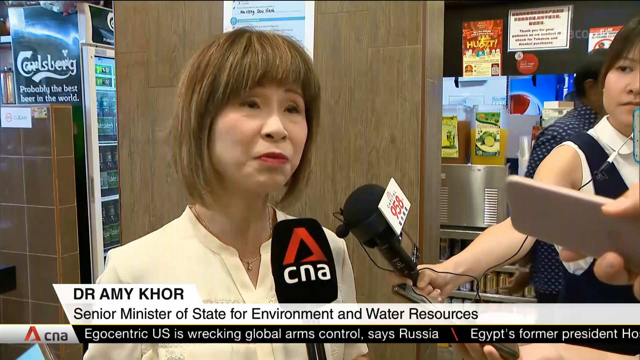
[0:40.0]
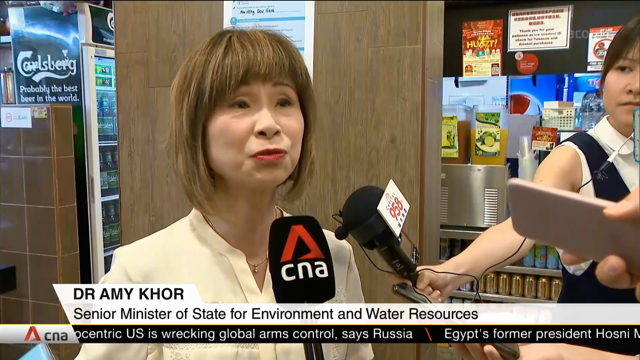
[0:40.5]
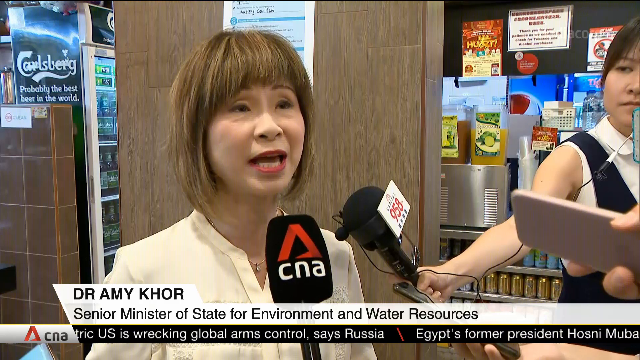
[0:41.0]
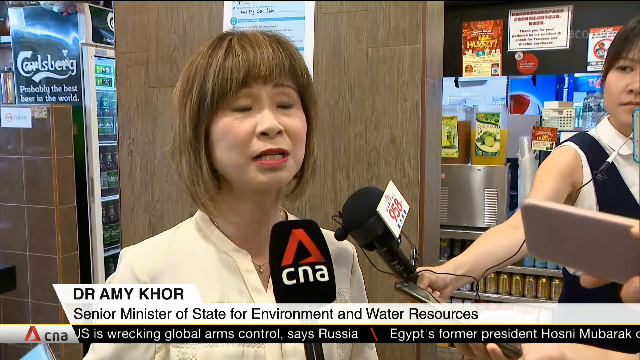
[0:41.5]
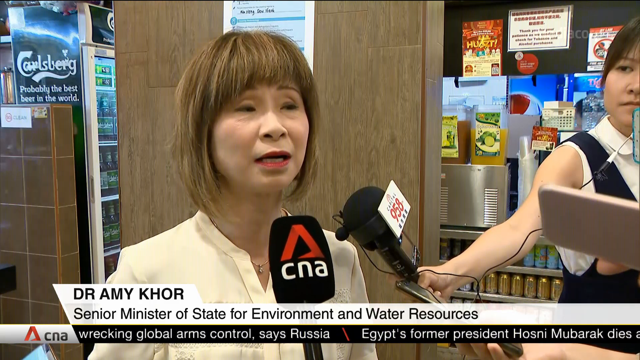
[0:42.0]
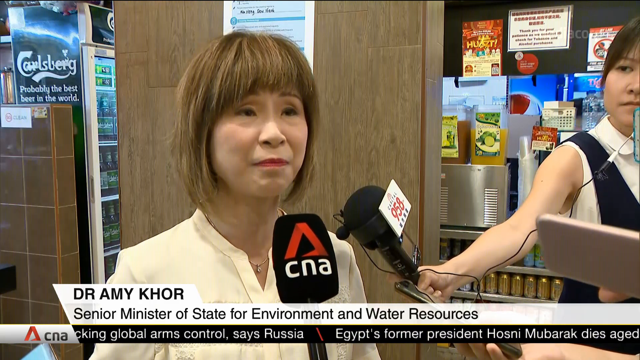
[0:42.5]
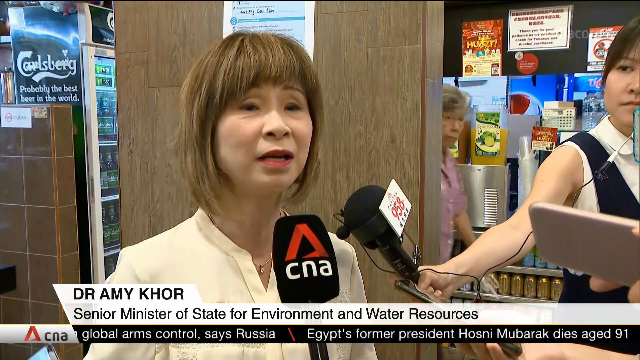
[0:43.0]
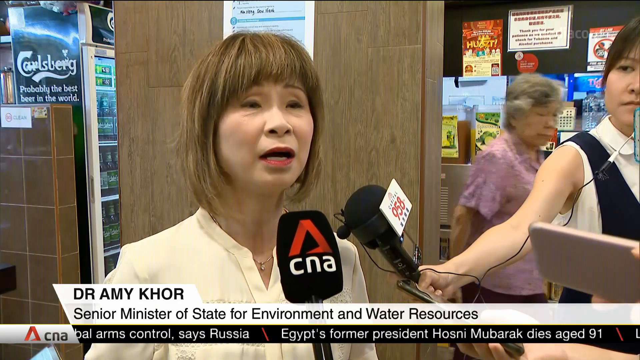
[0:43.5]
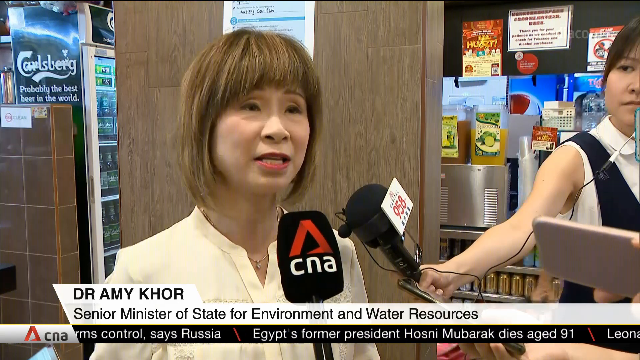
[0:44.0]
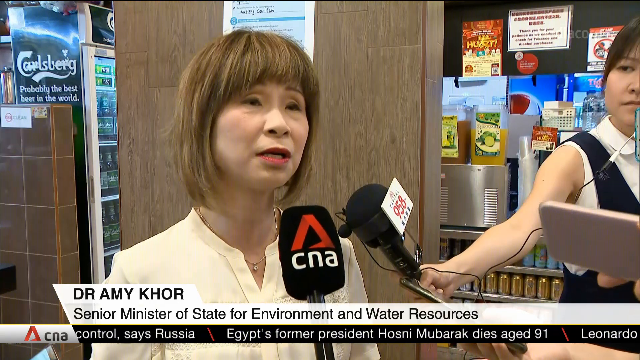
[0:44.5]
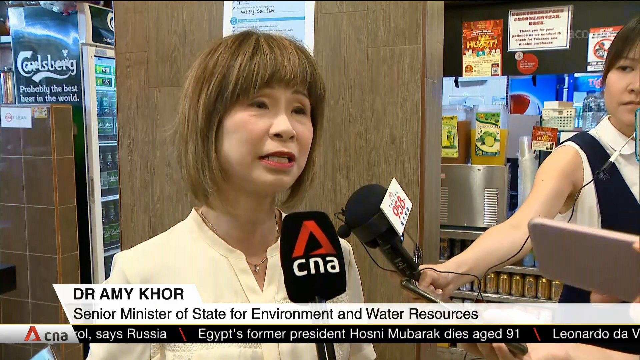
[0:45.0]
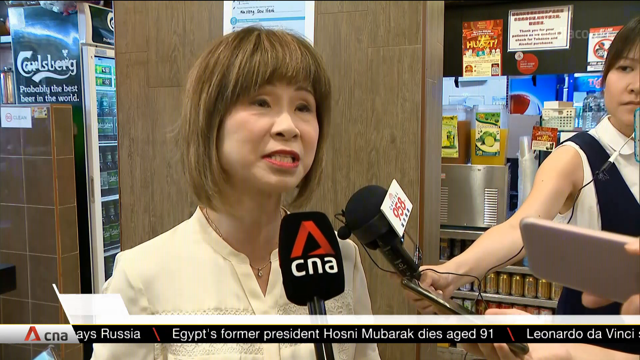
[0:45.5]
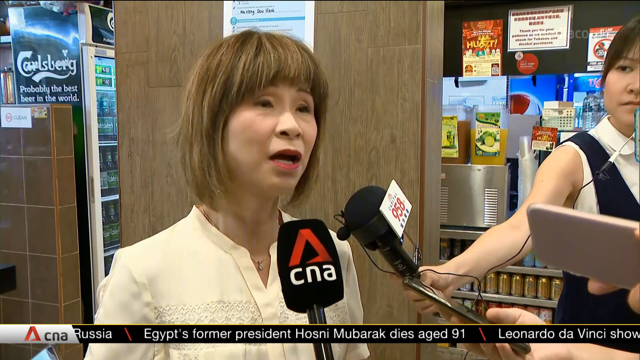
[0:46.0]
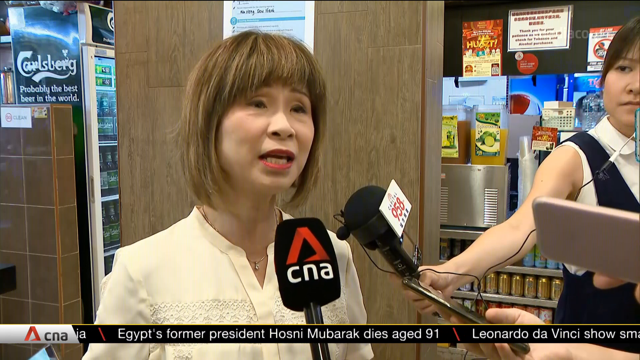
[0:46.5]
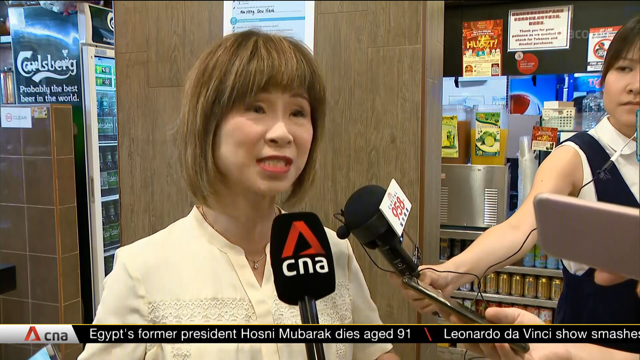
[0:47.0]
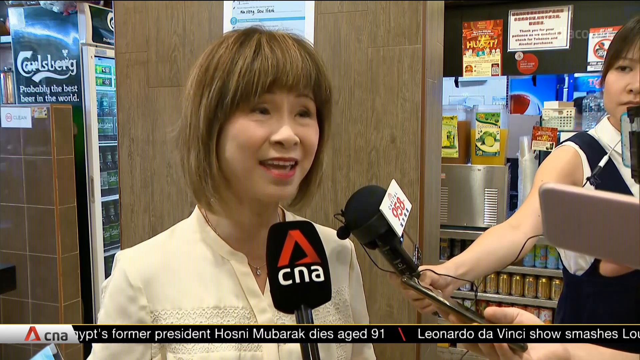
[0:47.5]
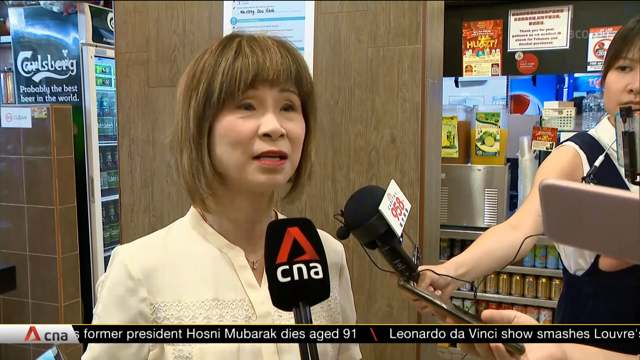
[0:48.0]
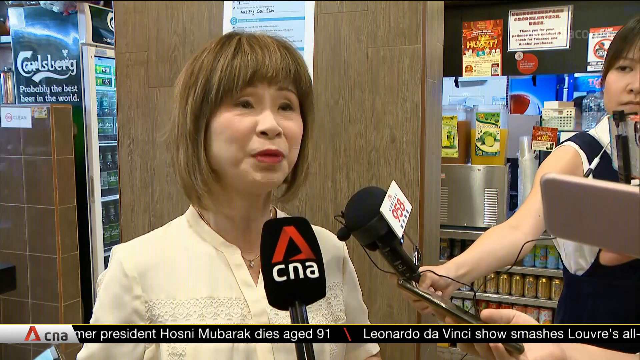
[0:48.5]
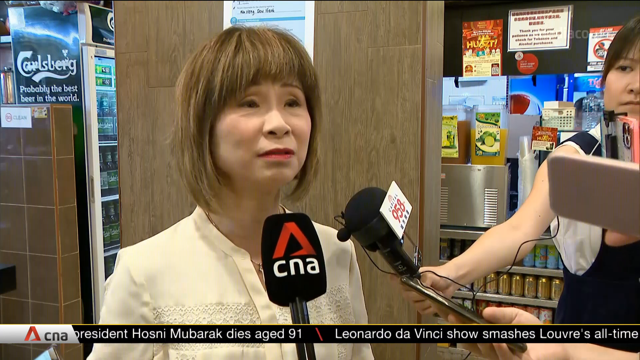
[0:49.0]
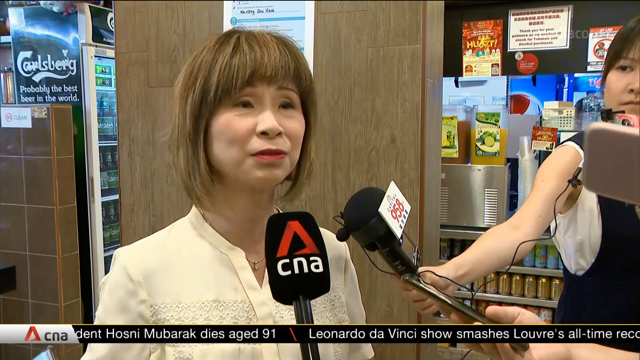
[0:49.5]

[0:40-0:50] A woman is being interviewed. She wears a cream-colored blouse and has very dark blonde hair with thick bangs, looks Asian, and has a wide nose and a long neck. Microphones are held up in front of her. To the right, a woman in a sleeveless shirt holds a microphone up, and also to the right someone holds out a smartphone. The banner beneath her says "Dr. Amy Khor" and then "Senior Minister of State for Environment and Water Resources". She moves her head slightly as she talks, emphasizing words.